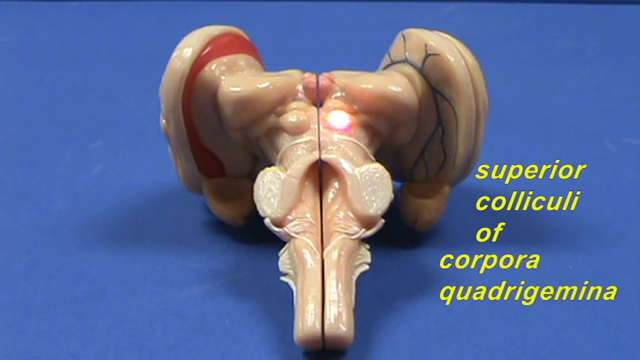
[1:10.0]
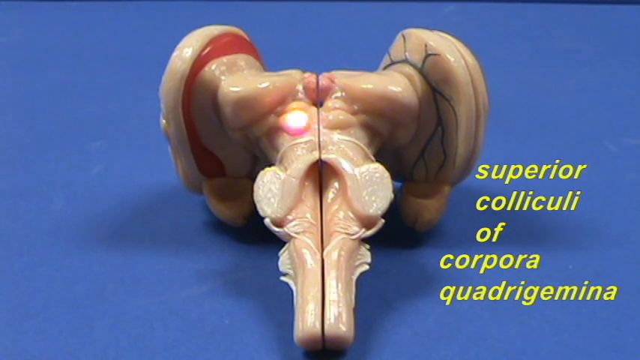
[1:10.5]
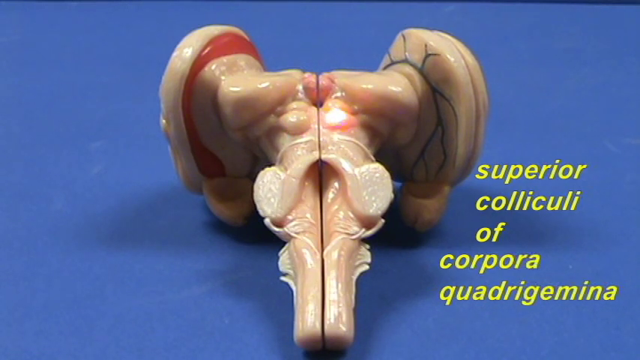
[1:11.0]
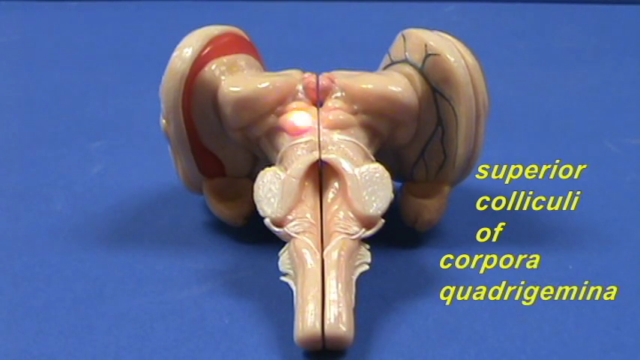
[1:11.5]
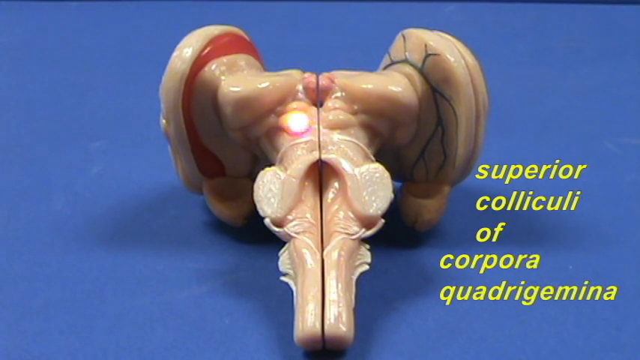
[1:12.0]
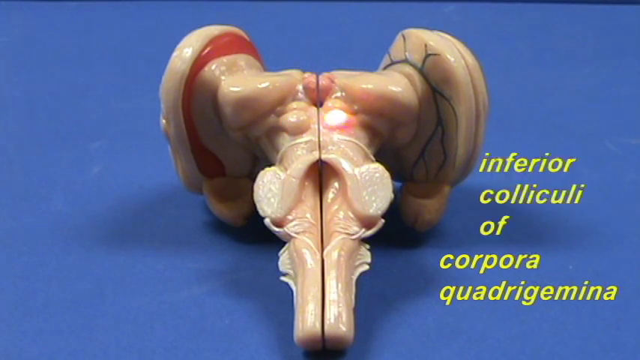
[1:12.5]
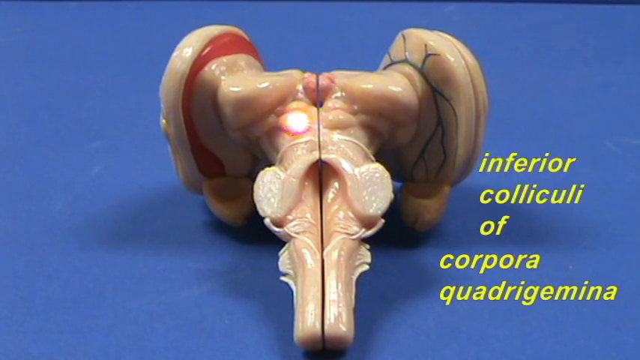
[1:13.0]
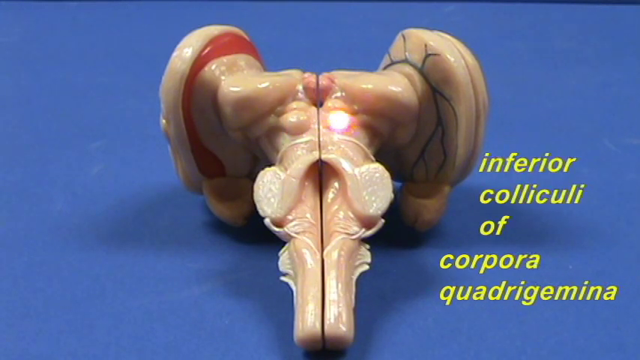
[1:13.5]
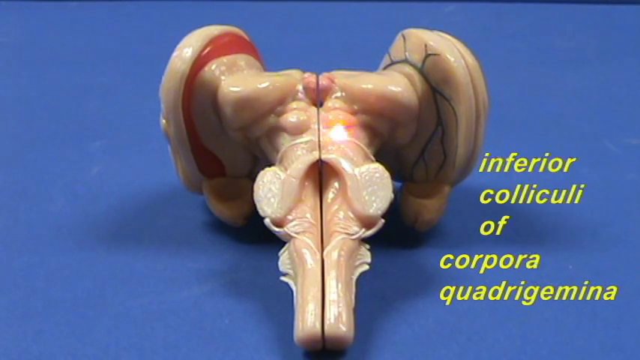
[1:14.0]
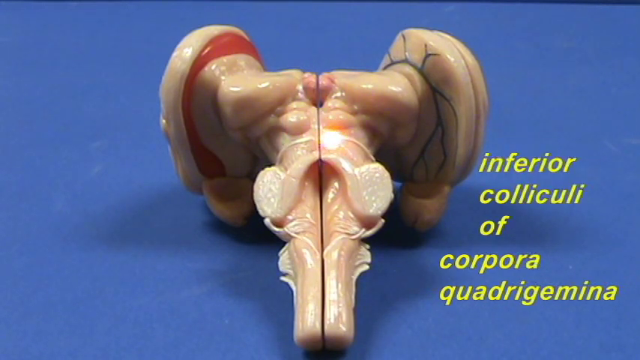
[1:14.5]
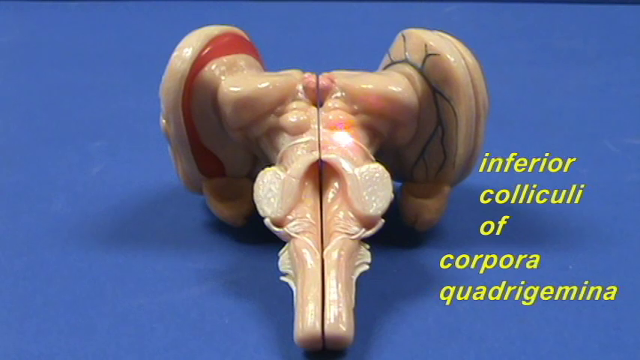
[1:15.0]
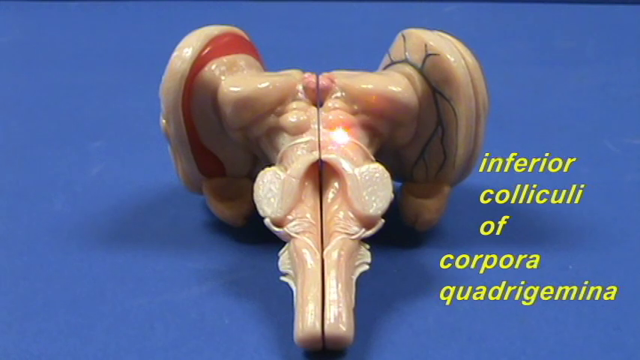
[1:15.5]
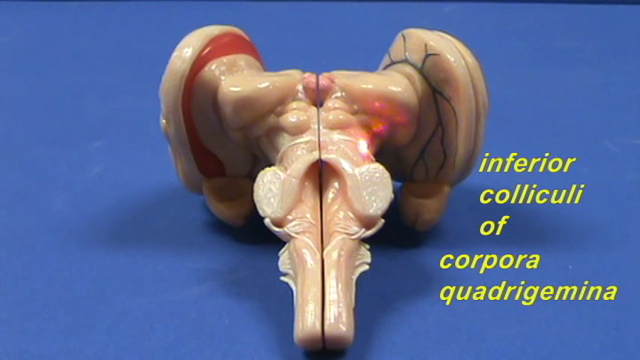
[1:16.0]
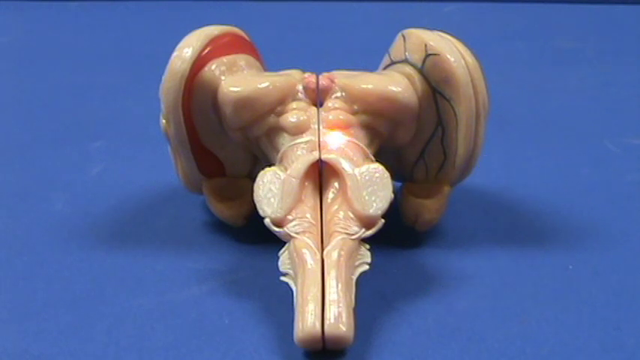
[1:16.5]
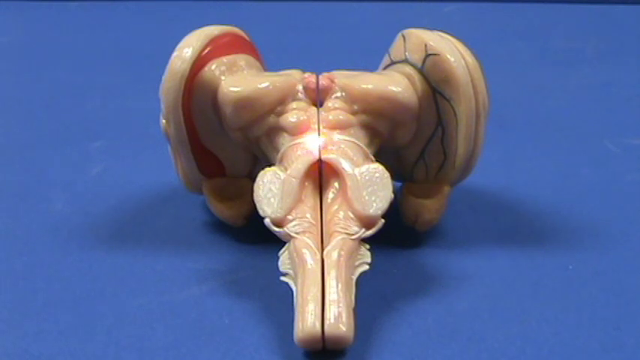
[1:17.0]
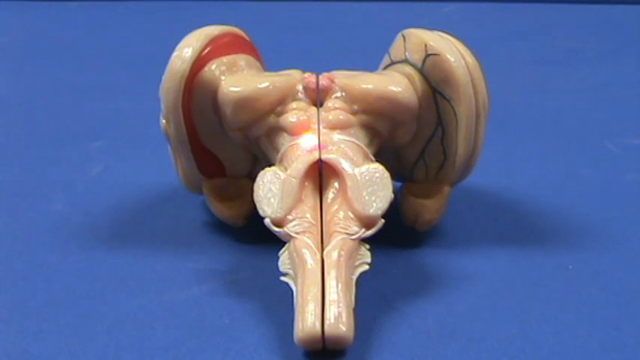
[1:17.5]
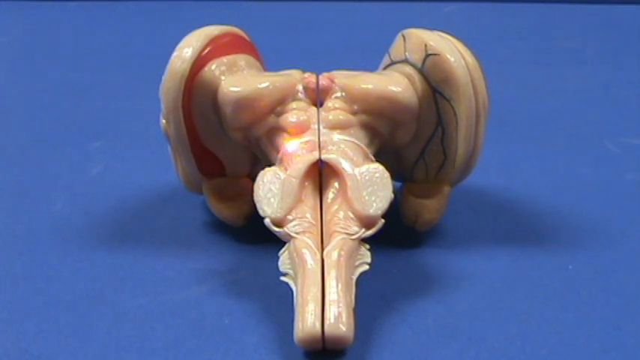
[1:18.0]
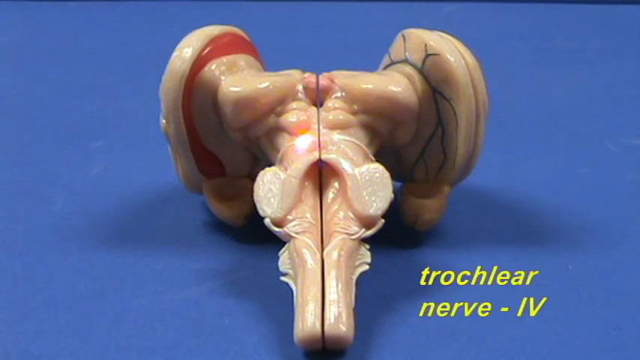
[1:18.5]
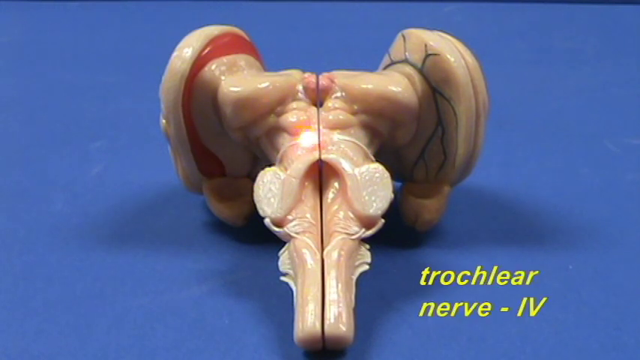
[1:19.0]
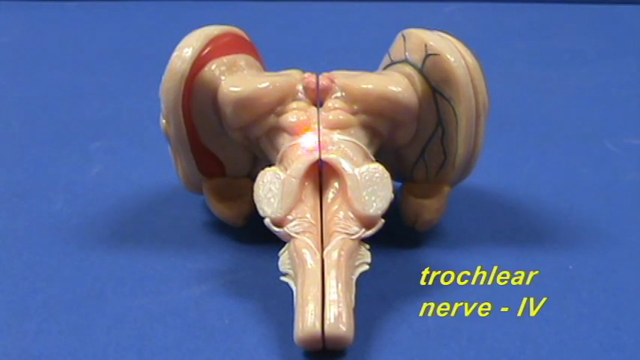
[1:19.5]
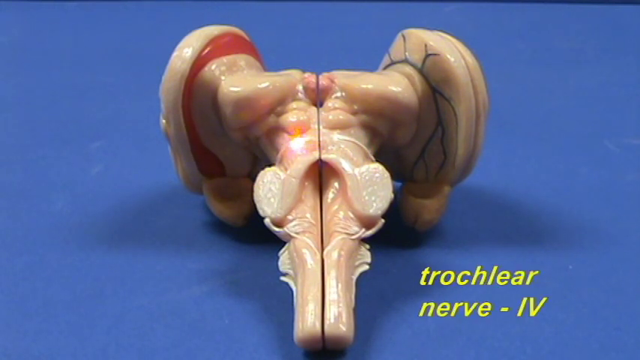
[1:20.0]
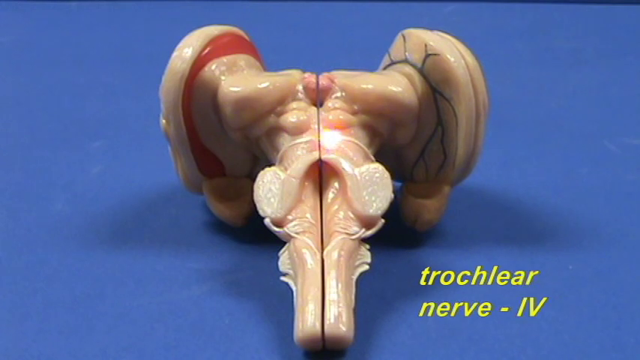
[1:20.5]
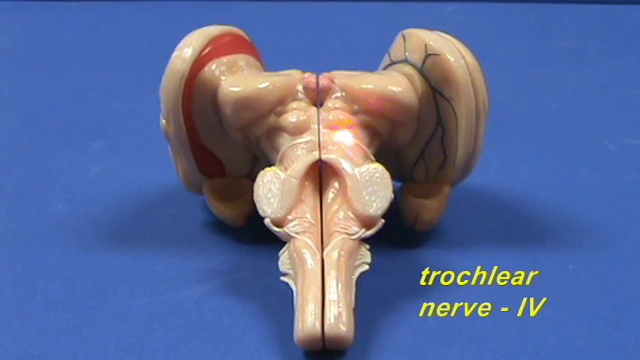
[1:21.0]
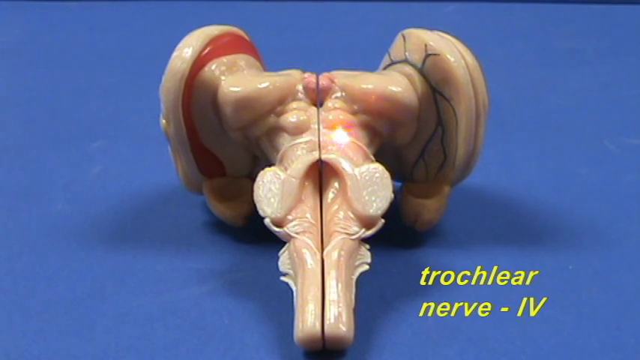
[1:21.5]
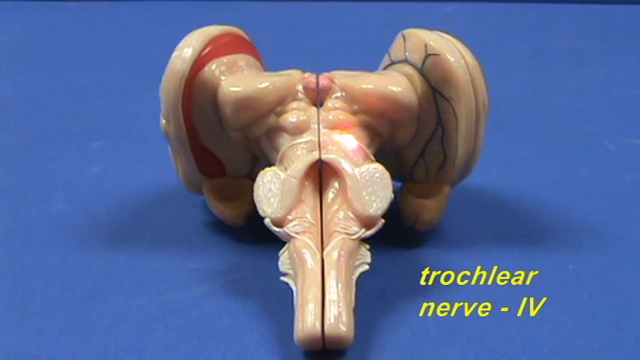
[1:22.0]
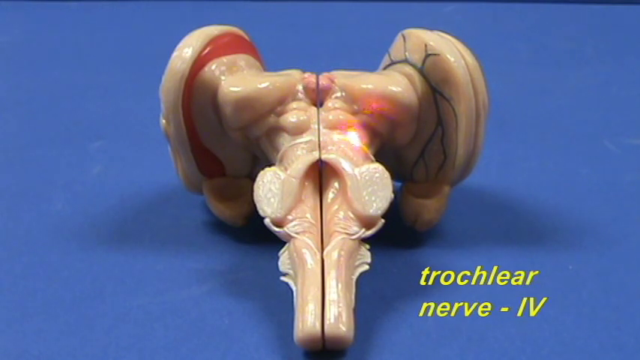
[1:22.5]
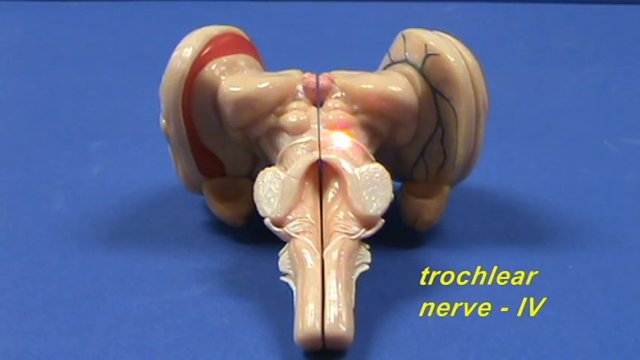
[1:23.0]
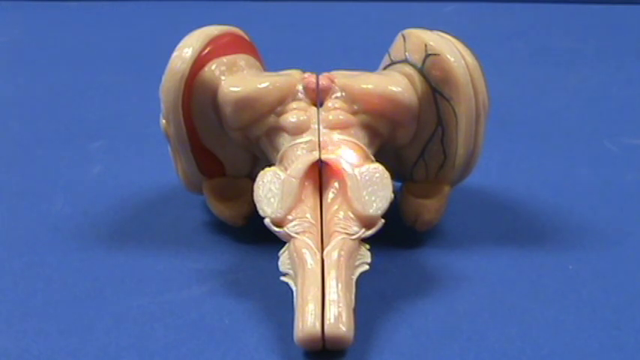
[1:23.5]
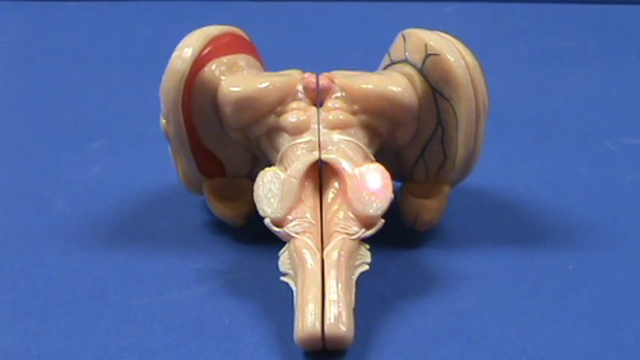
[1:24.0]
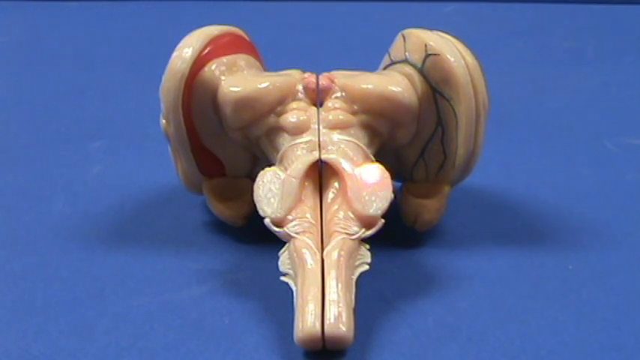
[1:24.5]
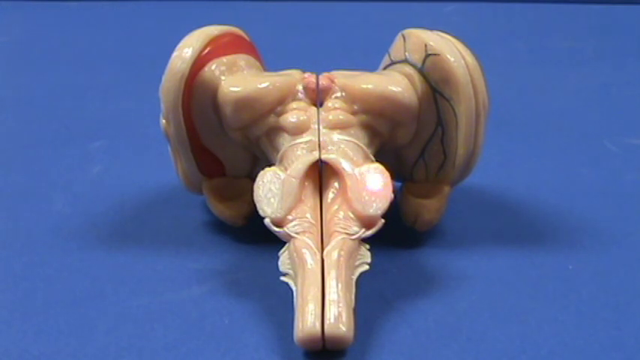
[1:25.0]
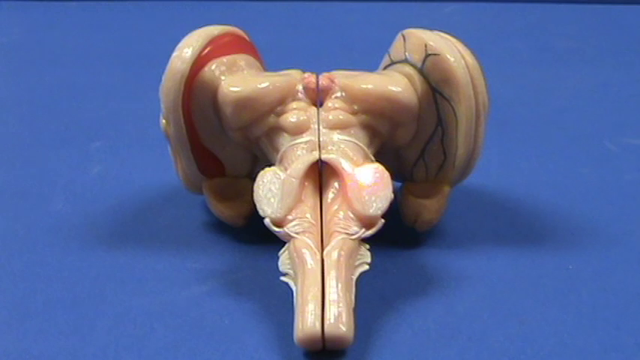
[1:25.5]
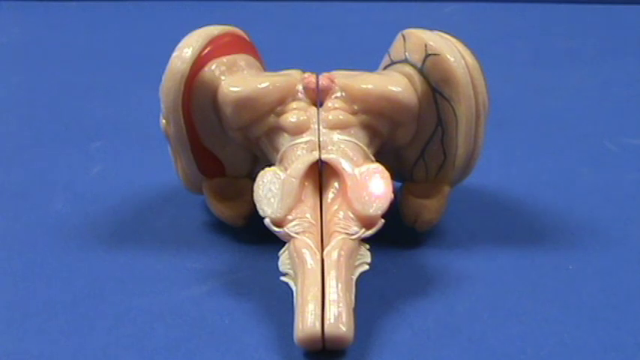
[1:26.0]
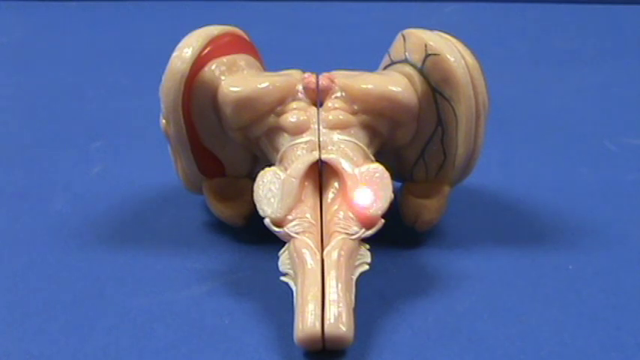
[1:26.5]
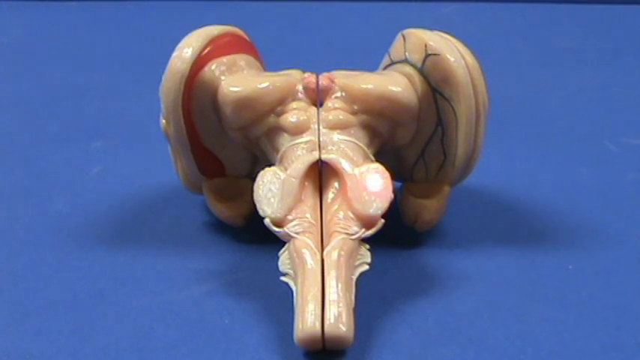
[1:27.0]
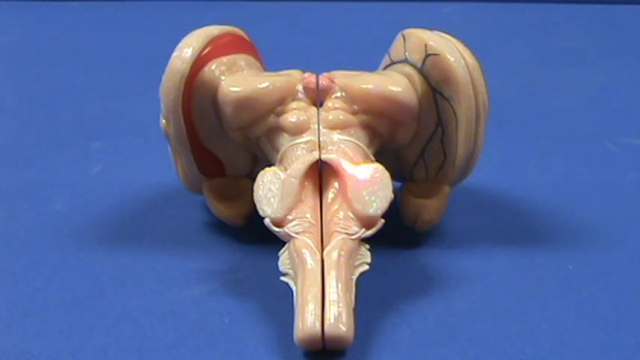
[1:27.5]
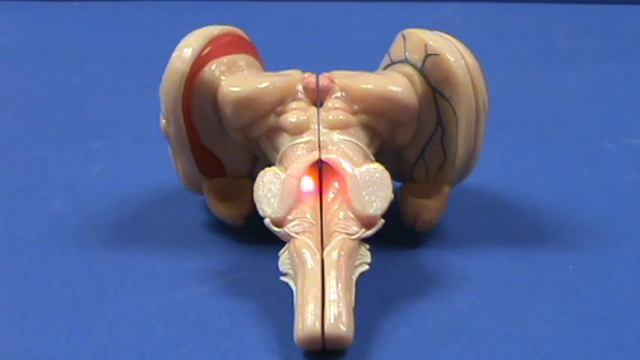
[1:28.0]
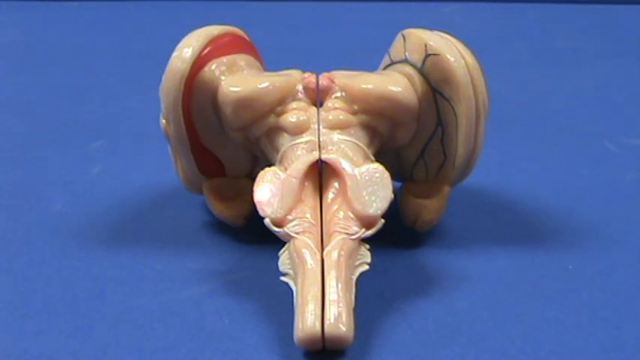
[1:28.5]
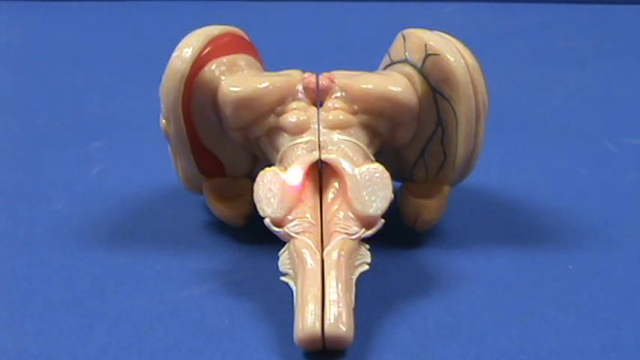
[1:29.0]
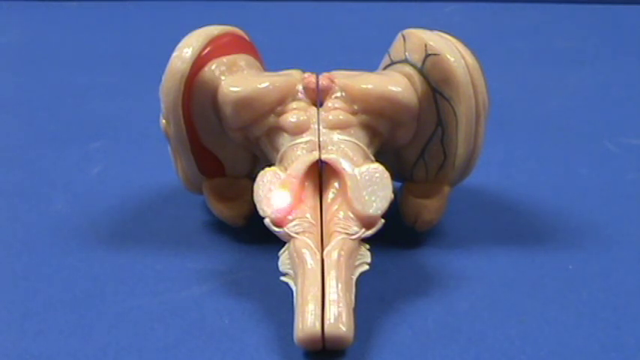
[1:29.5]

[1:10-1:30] The laser moves from the superior coliculi of corpora quadrigemina down to what appears to be the center of them, the inferior coliculi of corpora quadrigemina; possibly the superior ones are on the outside and a matching little bulge on the inside is the inferior. The laser then moves down to what appear to be two ridges that run from the center and curve around toward the back on either side, and the words at the bottom right of the screen change to "trochlear nerve - IV." Next the laser moves down from these ridges to what appear to be round disks at the ends of the ridges, flat toward the camera, and begins circling them, first on the right and then on the left. The ridge appears to be the beginning of an overlap that runs all the way down to these two disks on the model.